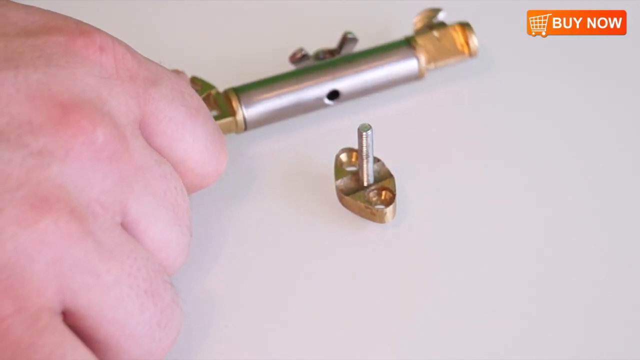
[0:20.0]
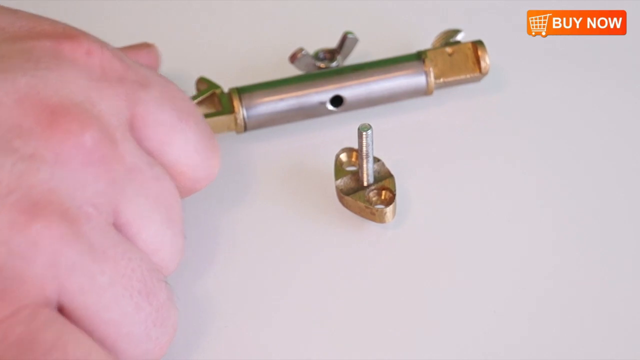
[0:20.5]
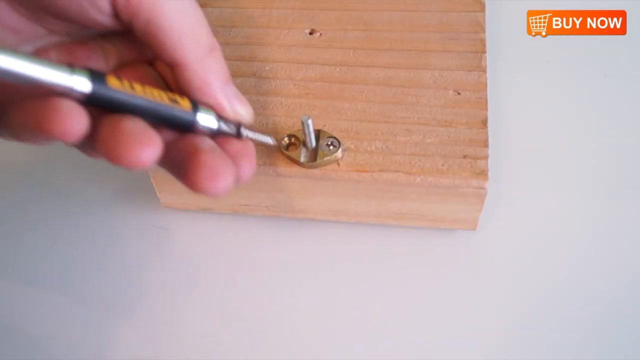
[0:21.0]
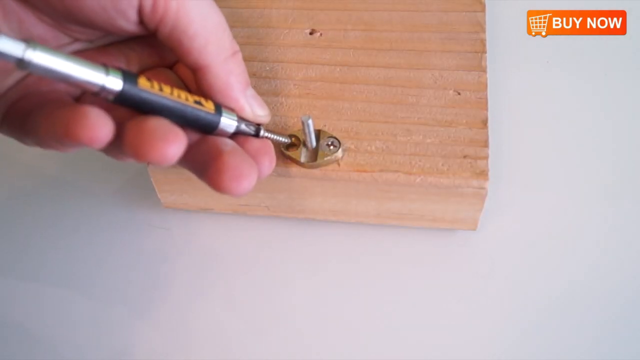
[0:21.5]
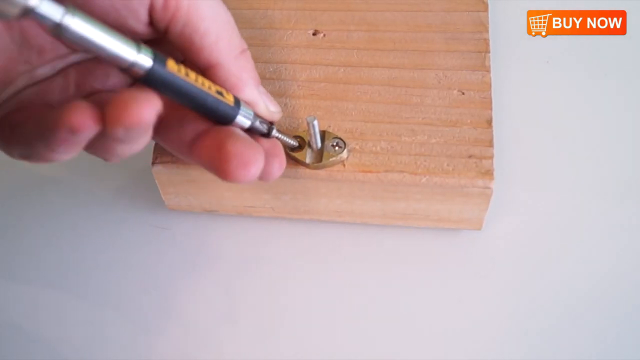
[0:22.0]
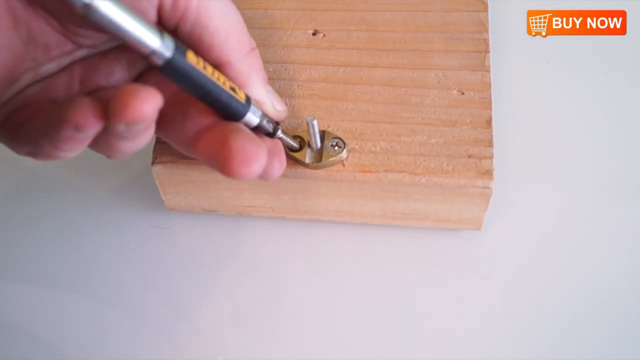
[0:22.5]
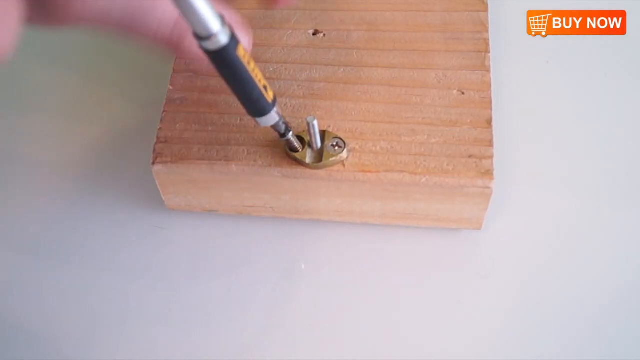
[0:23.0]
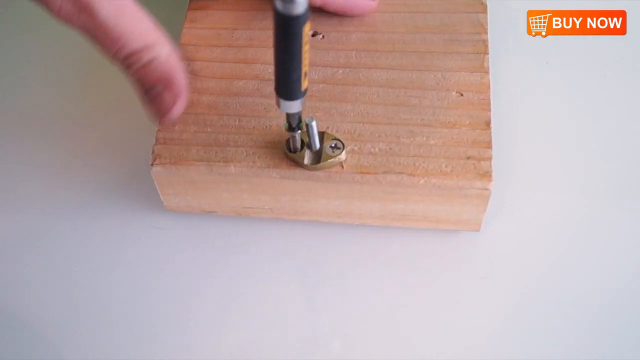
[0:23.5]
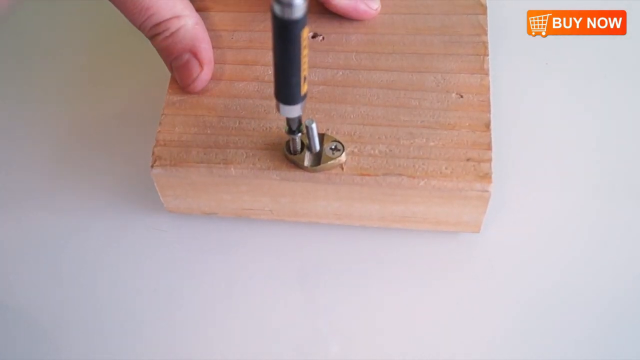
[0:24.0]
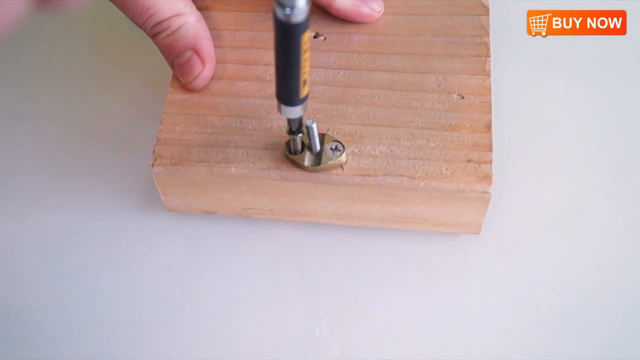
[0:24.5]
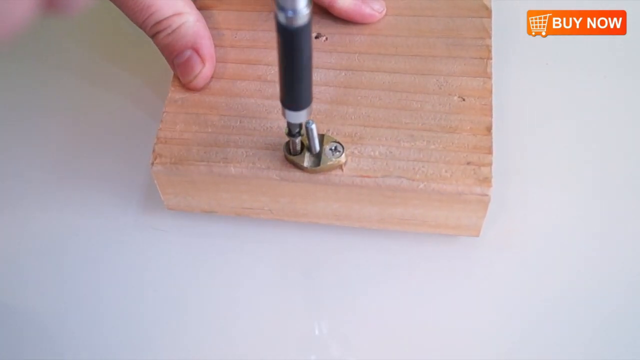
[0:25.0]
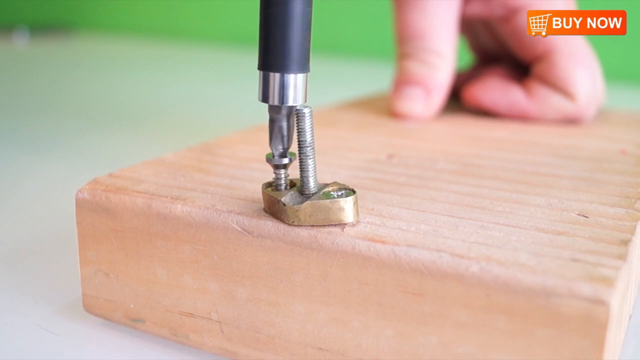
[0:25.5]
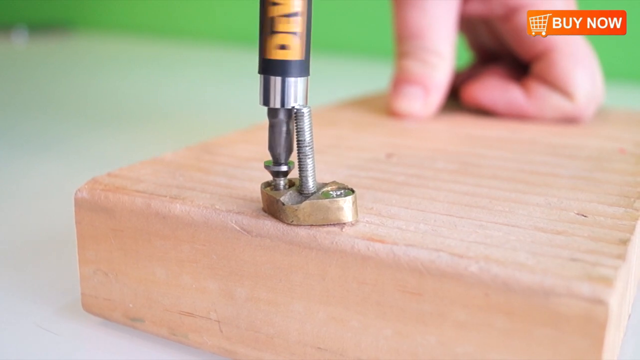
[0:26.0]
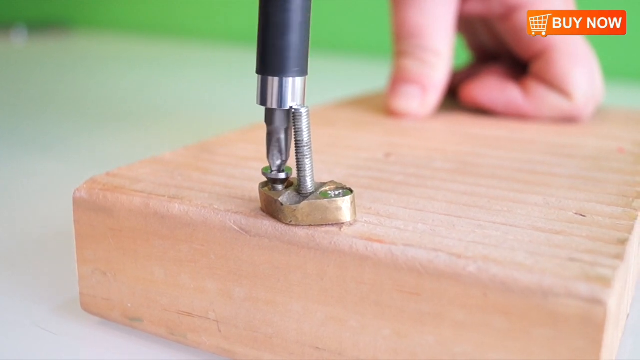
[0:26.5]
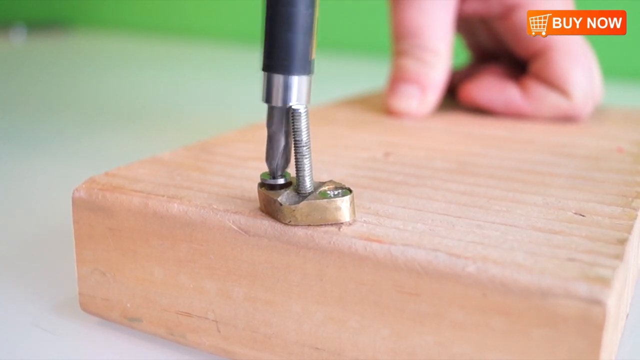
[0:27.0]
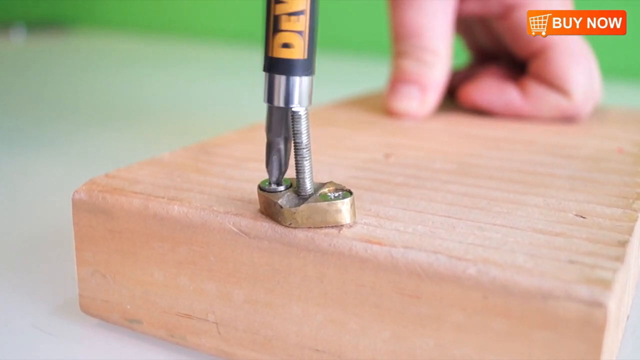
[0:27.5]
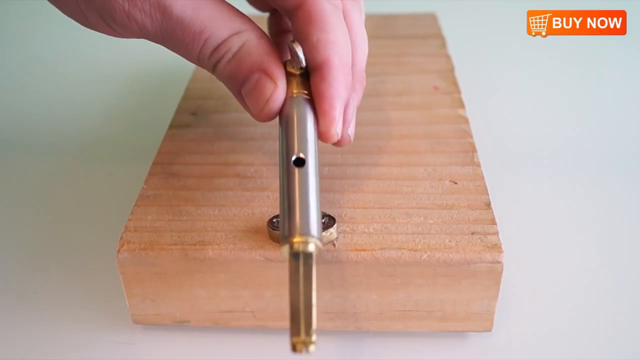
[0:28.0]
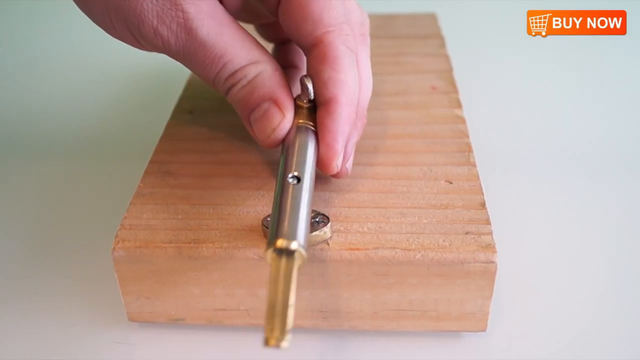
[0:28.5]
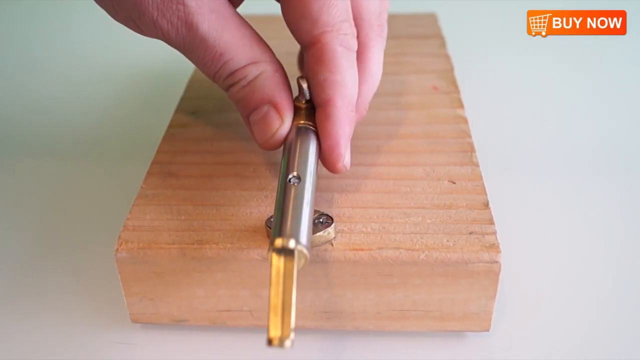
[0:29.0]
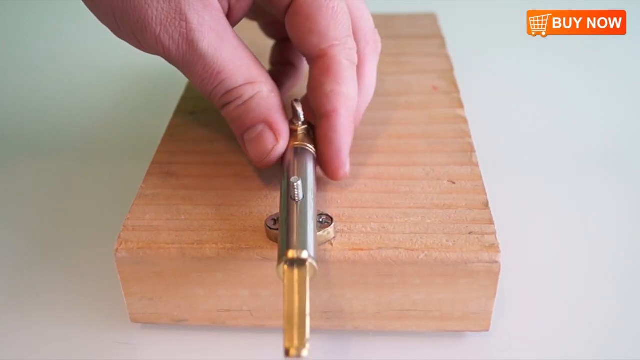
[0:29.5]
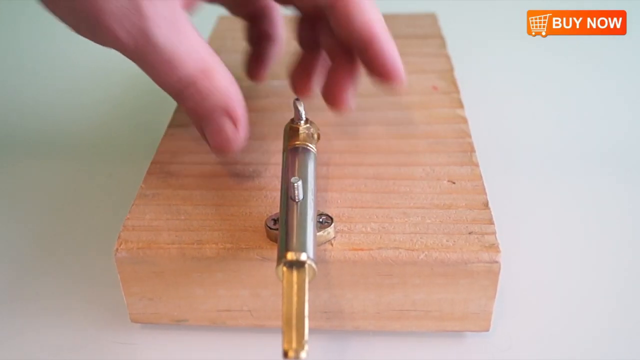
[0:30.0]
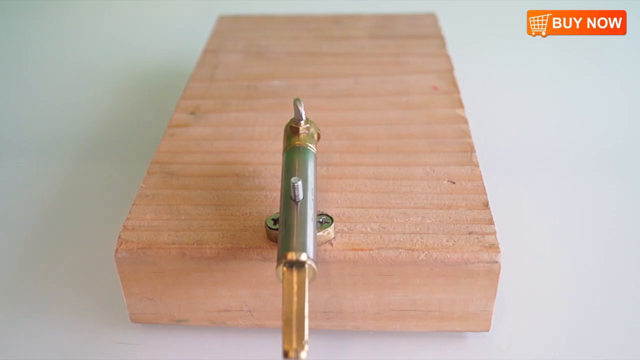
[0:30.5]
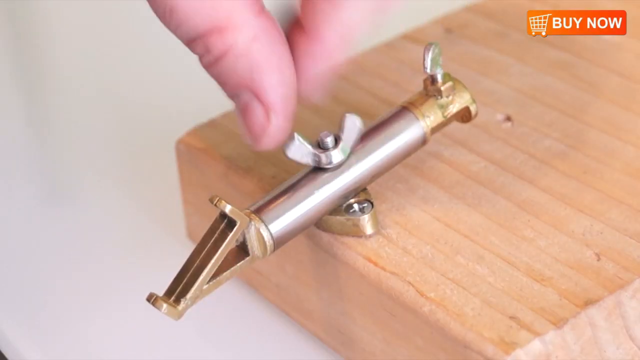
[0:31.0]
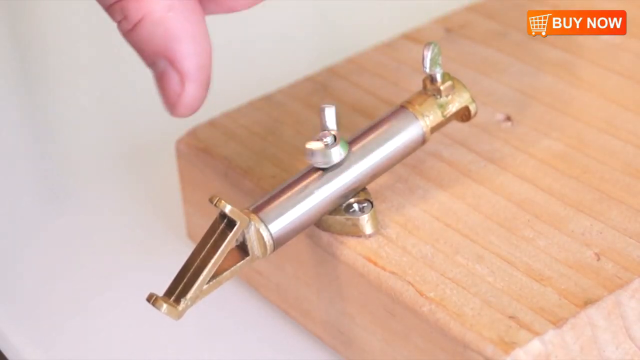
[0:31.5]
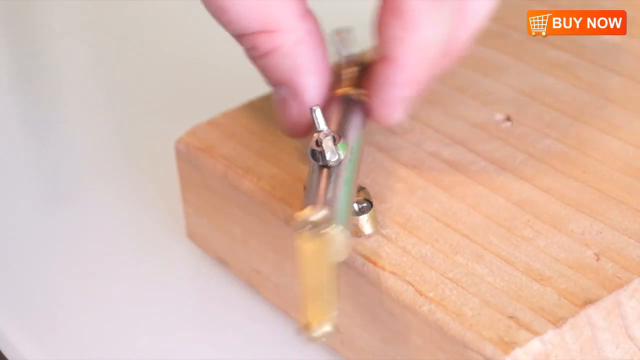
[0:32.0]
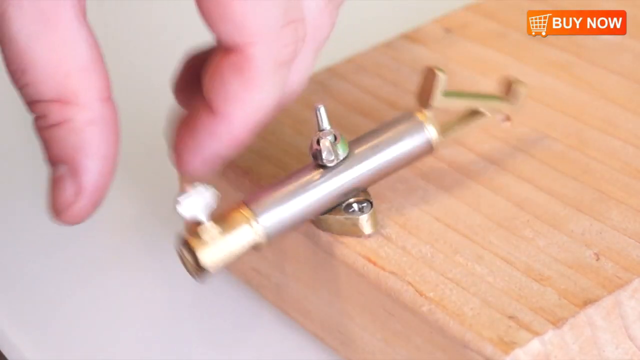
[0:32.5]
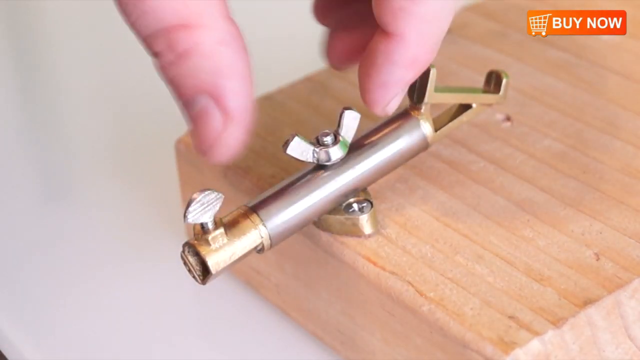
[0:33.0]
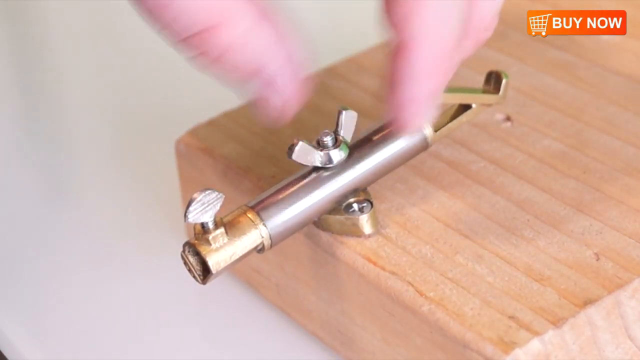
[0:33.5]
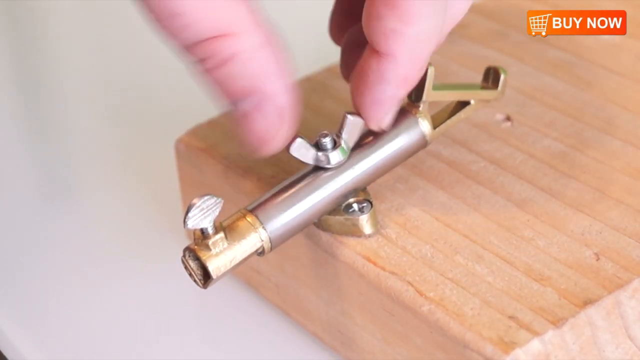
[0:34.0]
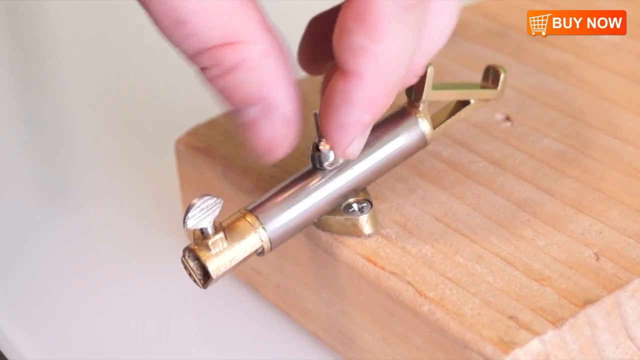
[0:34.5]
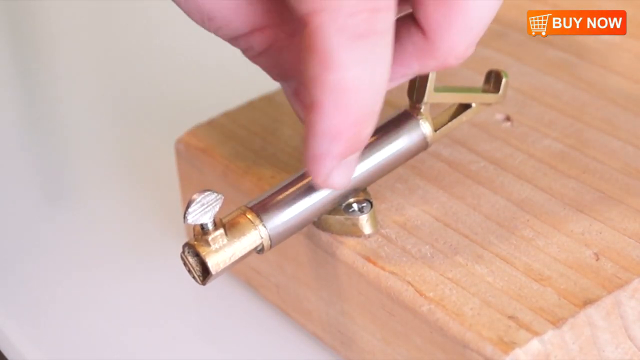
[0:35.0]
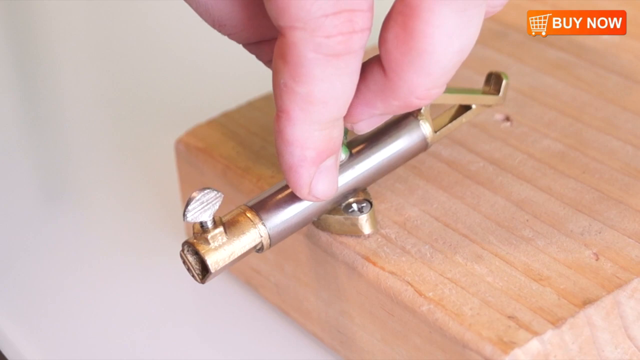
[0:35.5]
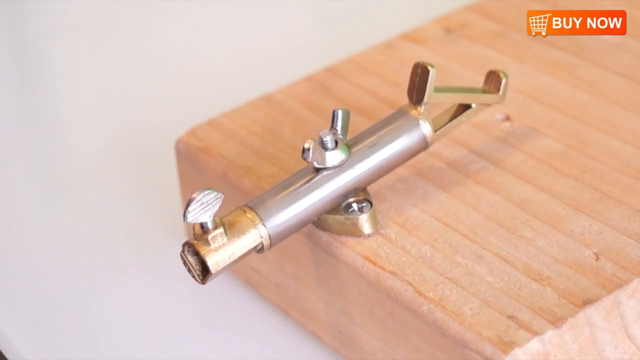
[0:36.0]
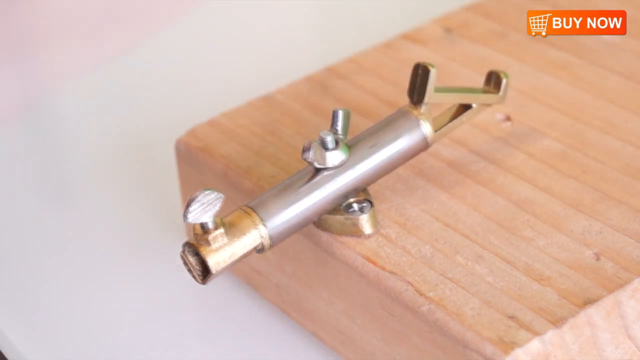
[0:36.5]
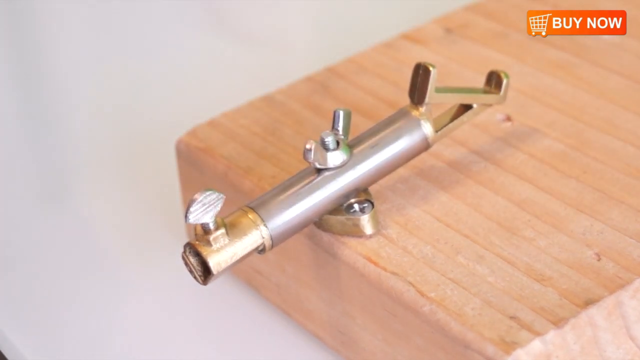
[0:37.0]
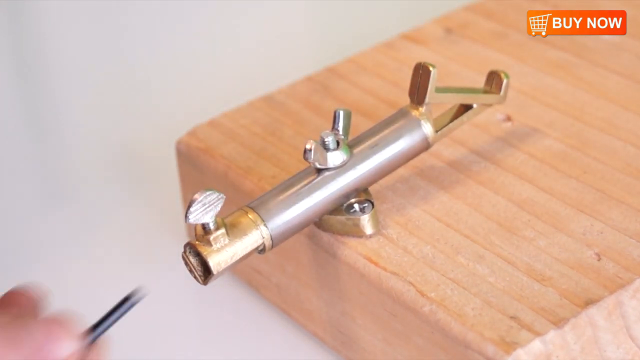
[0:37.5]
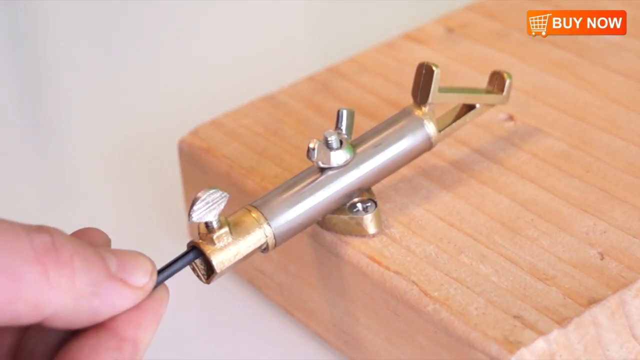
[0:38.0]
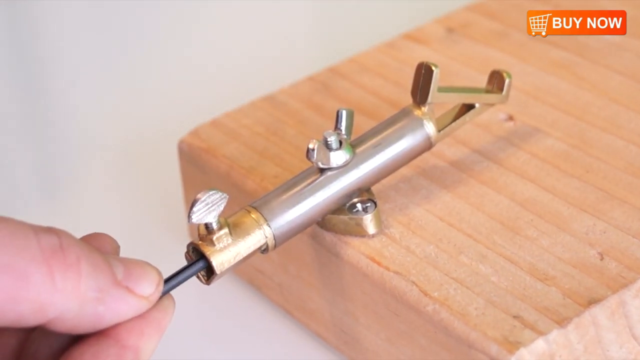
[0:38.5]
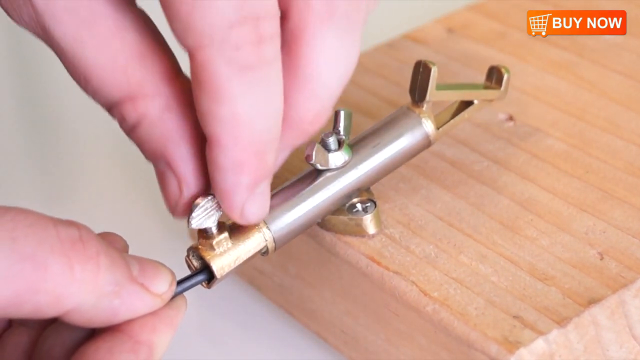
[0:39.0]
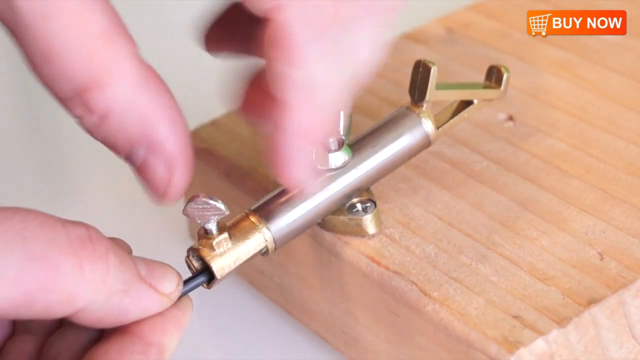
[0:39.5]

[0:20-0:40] After the man takes the piece out, there is a board where he uses an automatic screwdriver. He puts the handle that was on the little gadget onto a chunk of wood, something like a two by four, then puts the piece on there, fastens the fastener and has it facing a certain way. Next he sticks in some kind of gray thing that resembles pencil graphite but could be metal. Only his hands are shown. The orange "buy now" button with a little cart is still in the upper right hand corner, and no price is shown.